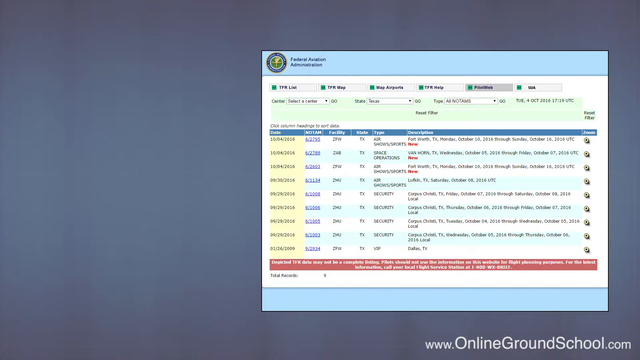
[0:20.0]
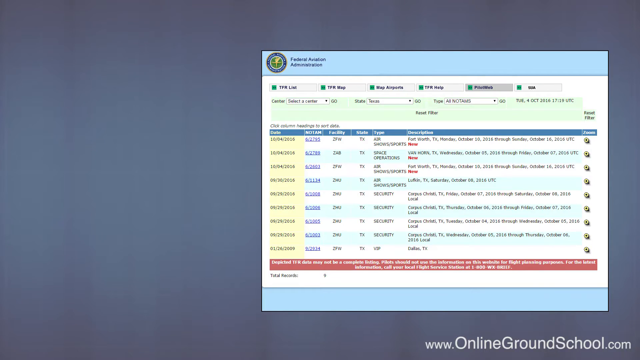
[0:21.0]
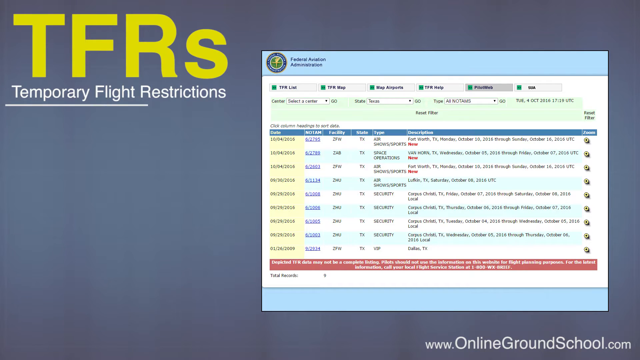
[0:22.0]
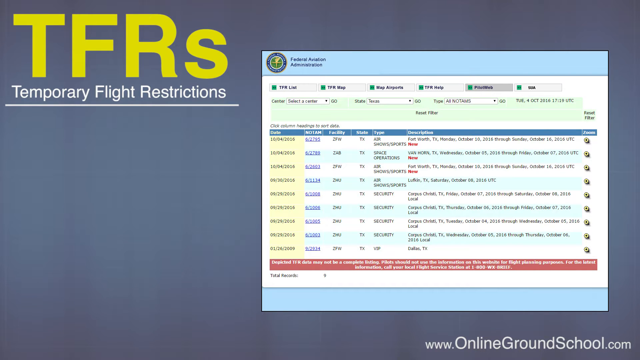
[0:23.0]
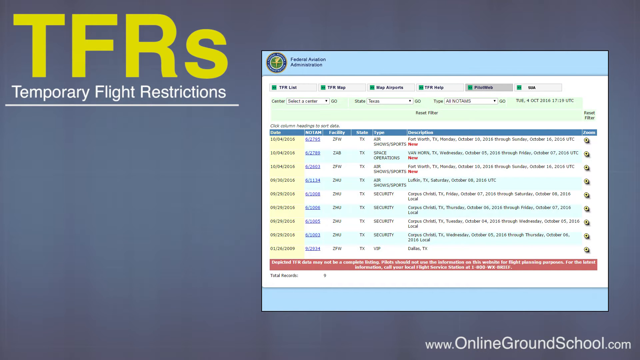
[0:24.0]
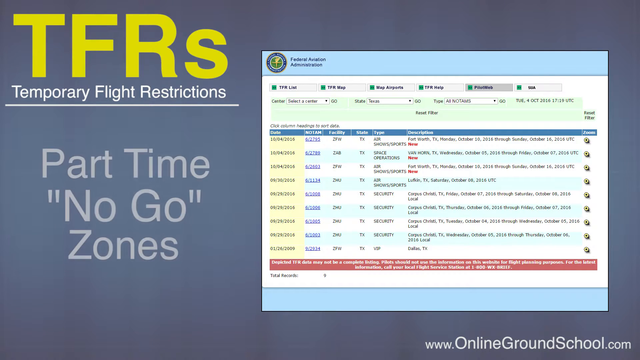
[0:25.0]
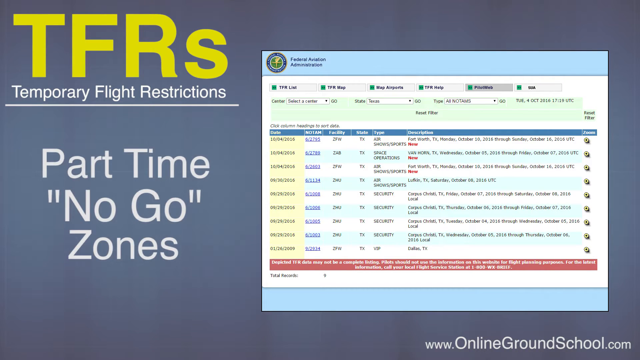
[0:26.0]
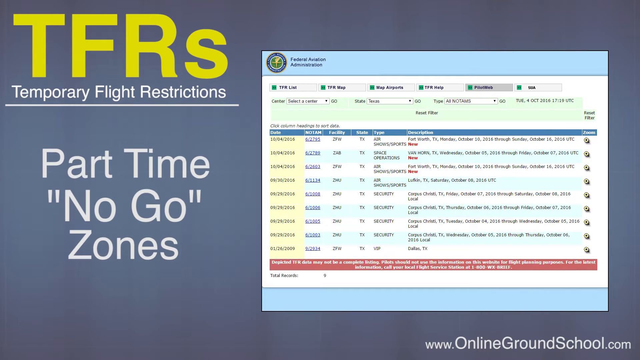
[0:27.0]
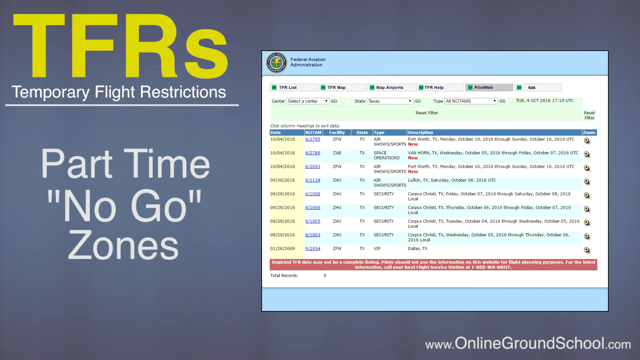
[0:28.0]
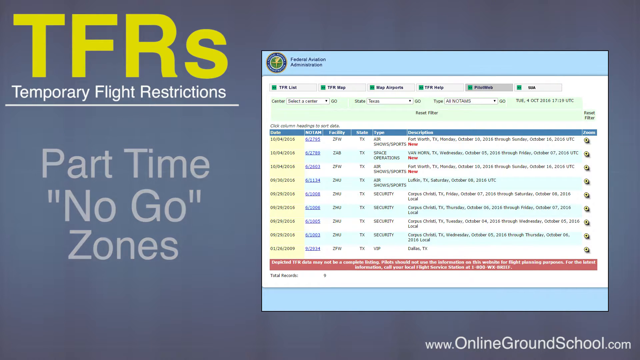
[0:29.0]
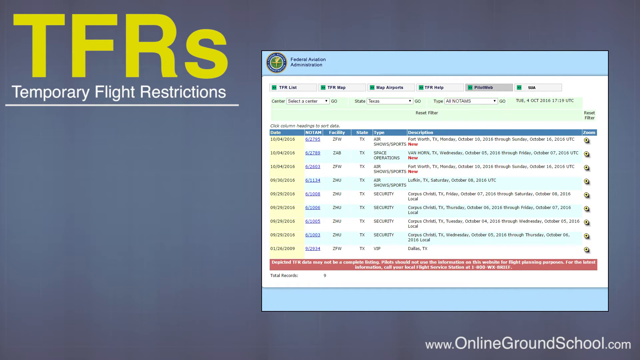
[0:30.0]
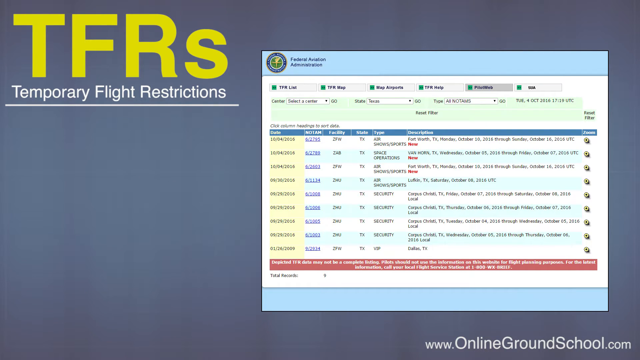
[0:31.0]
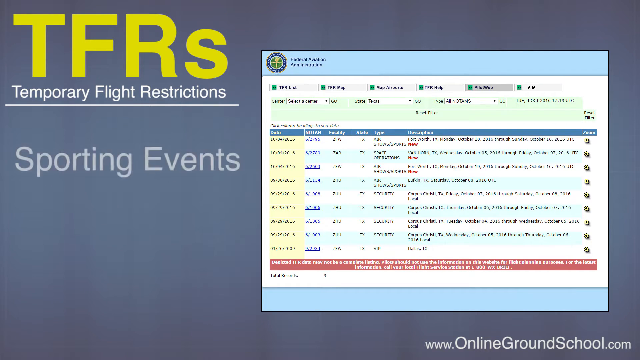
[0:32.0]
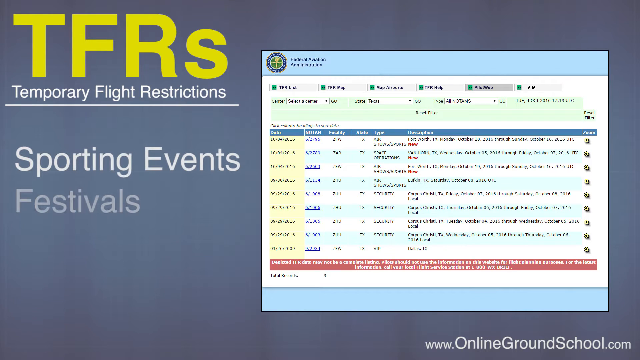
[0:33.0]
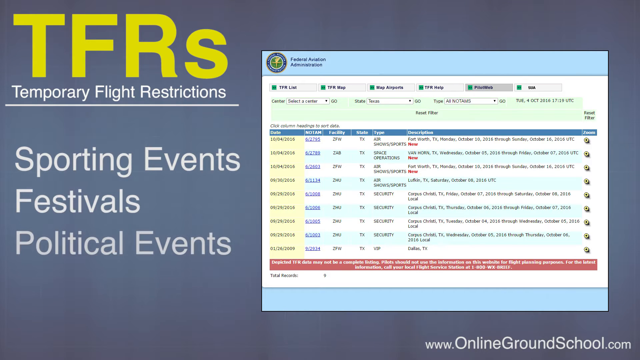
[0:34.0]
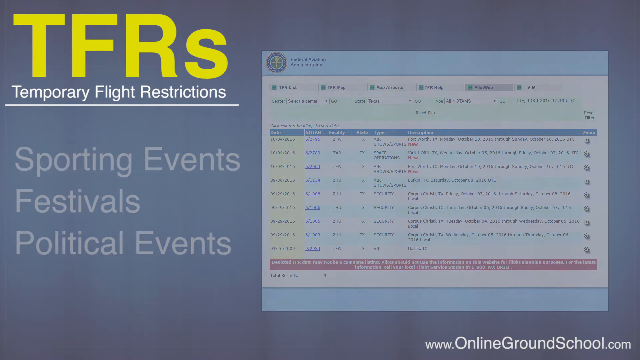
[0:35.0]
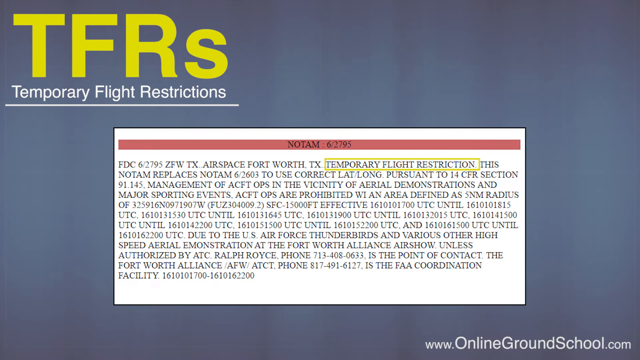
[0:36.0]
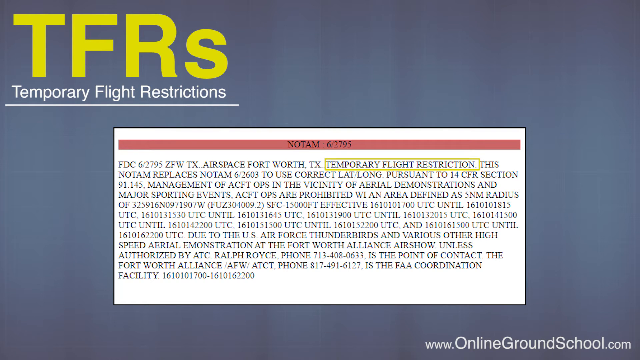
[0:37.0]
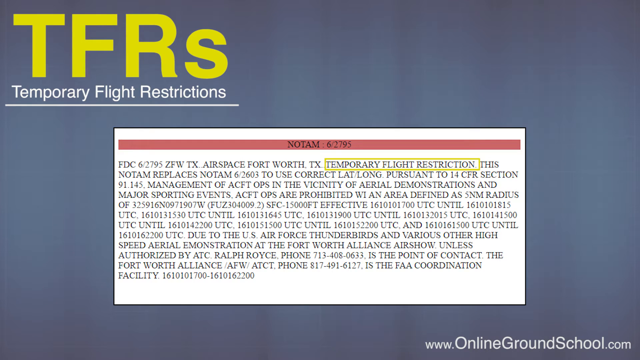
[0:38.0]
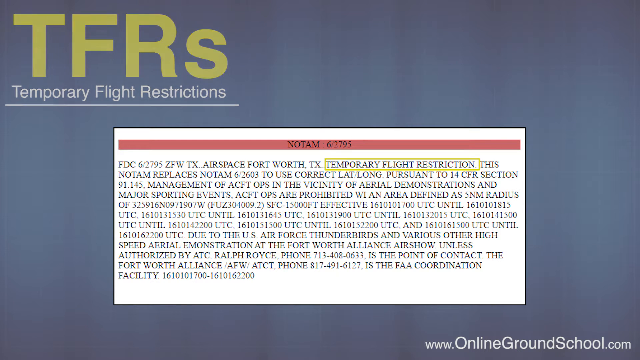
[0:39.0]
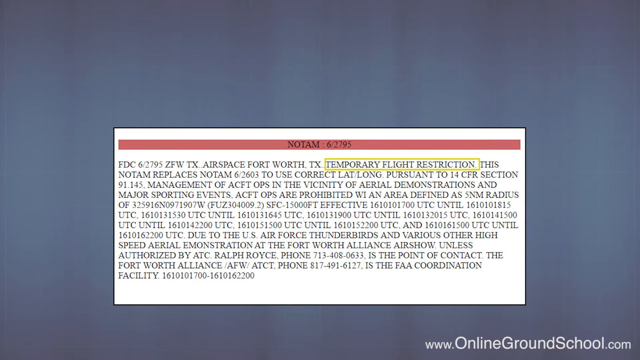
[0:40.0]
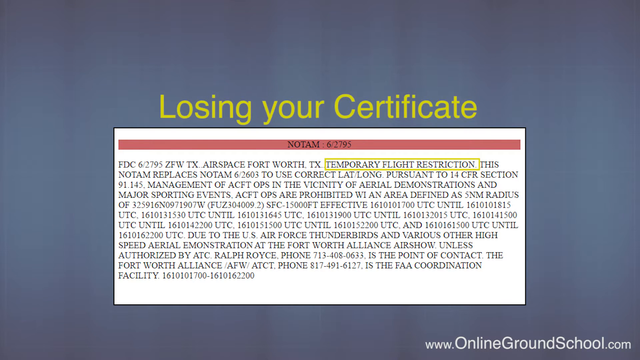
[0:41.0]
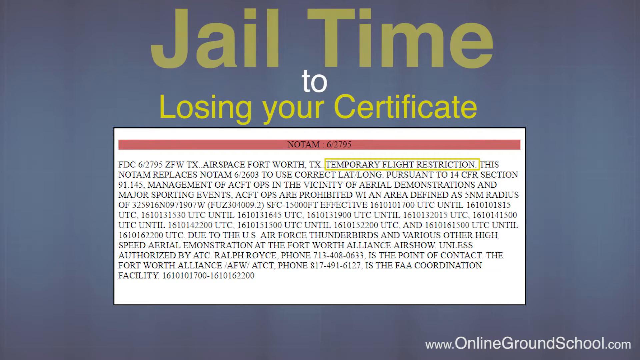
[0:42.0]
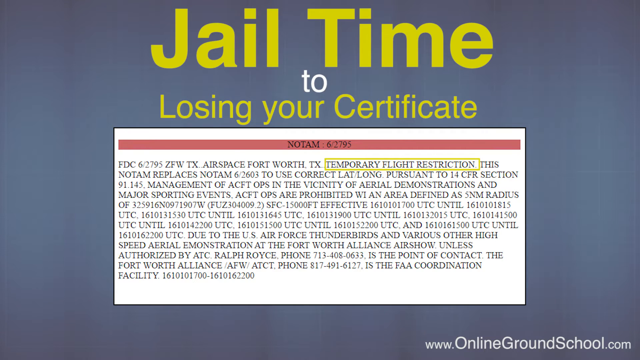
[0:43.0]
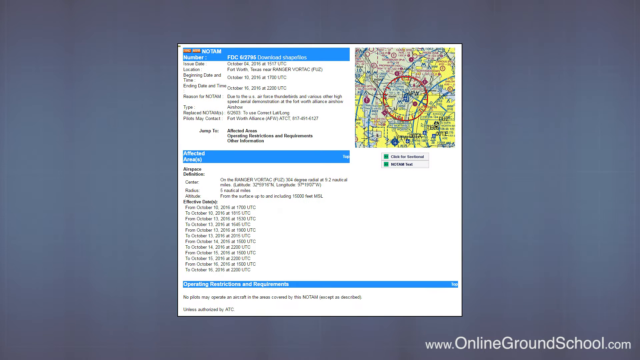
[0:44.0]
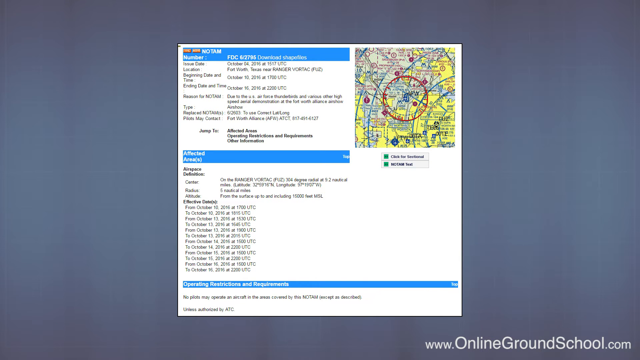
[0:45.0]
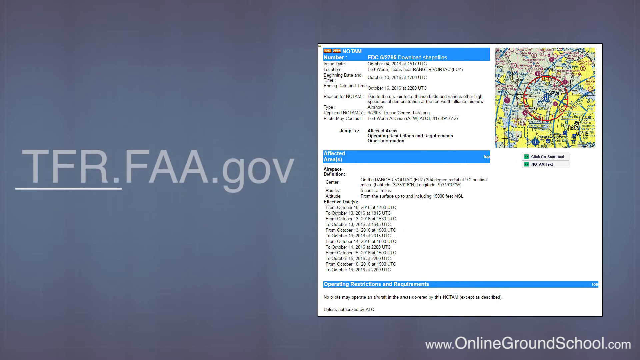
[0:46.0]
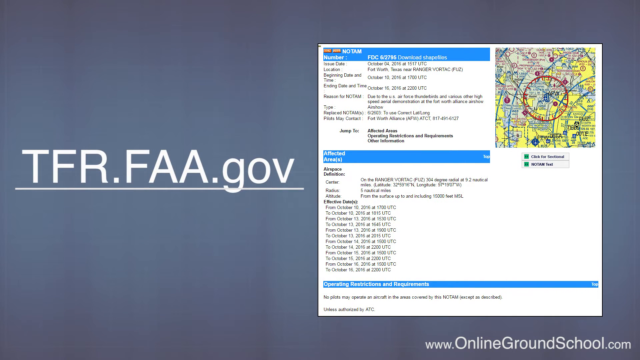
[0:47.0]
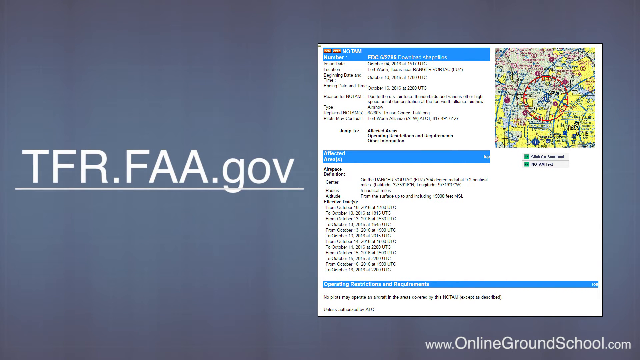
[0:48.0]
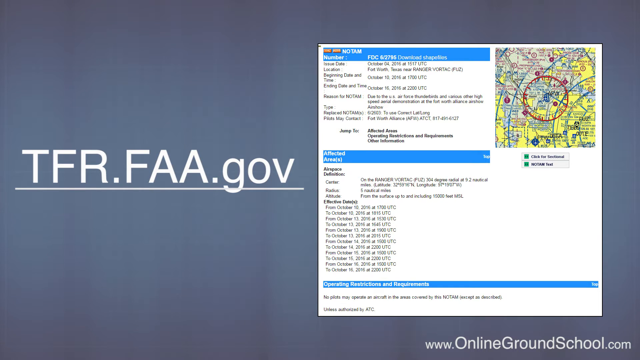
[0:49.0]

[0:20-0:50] A screen with a grey-bluish background shows a web address in the bottom right-hand corner reading "www.onlinegroundschool.com". On the right side is a screenshot, quite blurry, containing a table grid of information with some drop-down options for filtering. Text appears at the top left reading "TFRs, Temporary Flight Restrictions", and a small paragraph appears below it reading "part-time no-go zones". The screen holds for a few seconds before that paragraph is removed and a new one appears reading "sporting events, festivals, political events". The screen then transitions to a cut-out image of a document with information about temporary flight restrictions, and text appears above it reading "jail time to losing your certificate". Another transition keeps the same bluish-grey background and shows another image in the centre of the screen; it is blurry, but a small map and some written details are visible. The image is pushed slightly to the right, and on the left text appears reading "tfr.faa.gov".